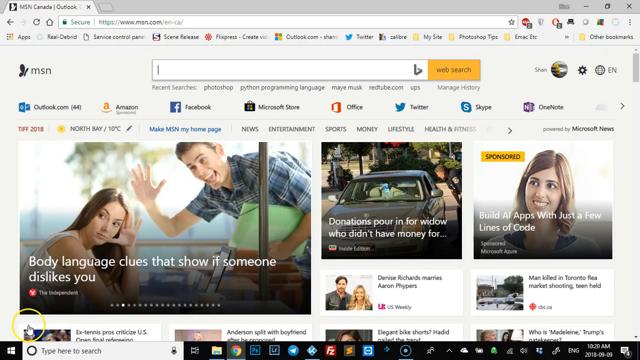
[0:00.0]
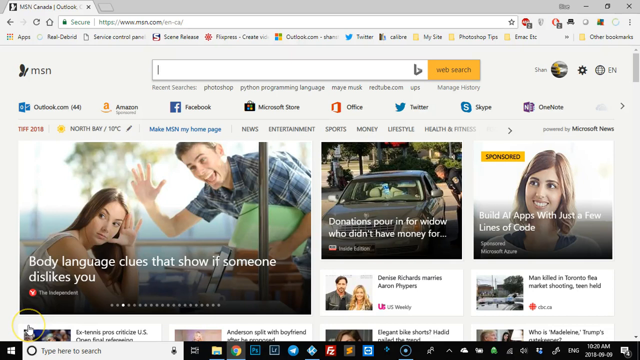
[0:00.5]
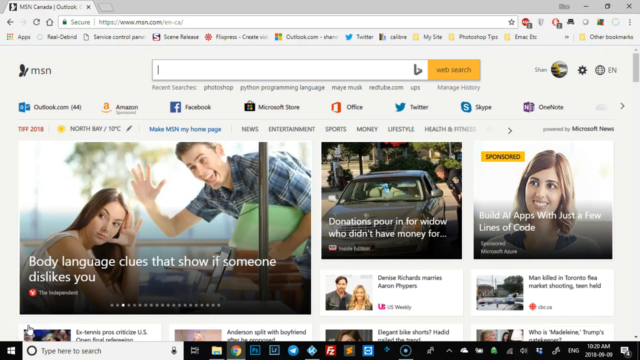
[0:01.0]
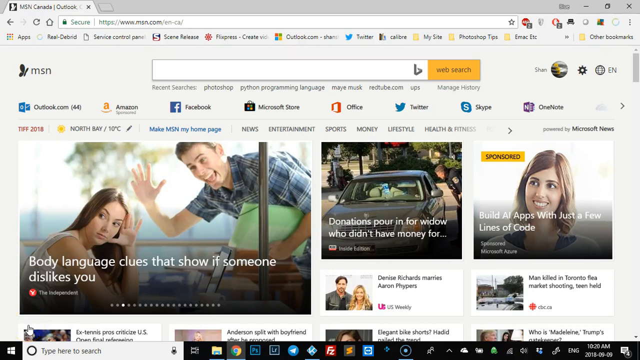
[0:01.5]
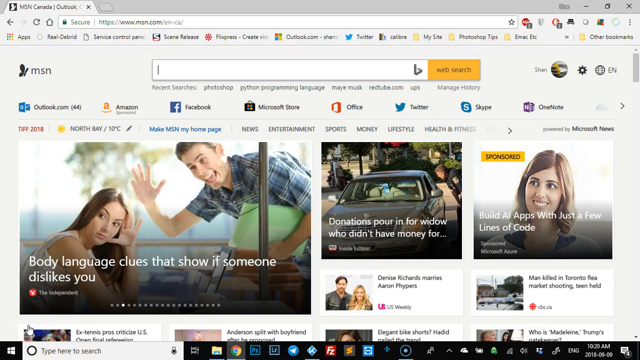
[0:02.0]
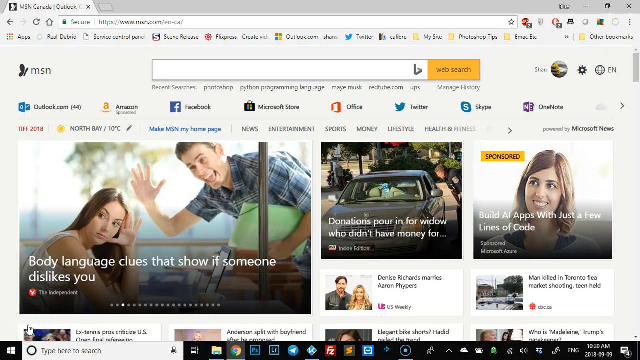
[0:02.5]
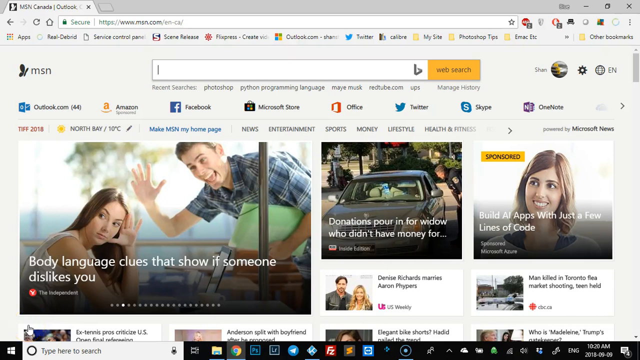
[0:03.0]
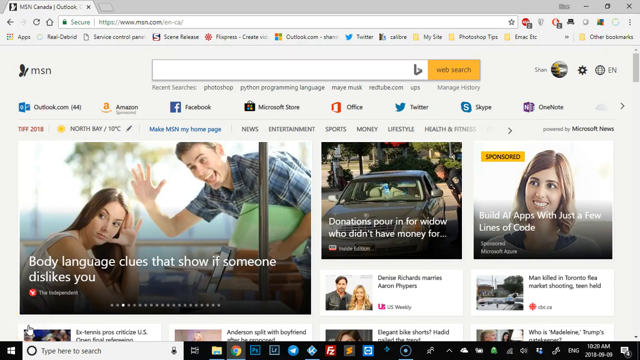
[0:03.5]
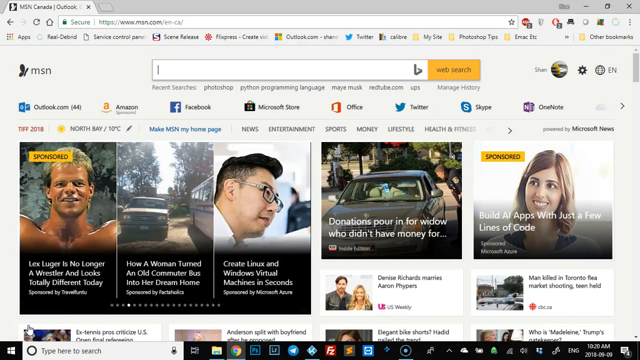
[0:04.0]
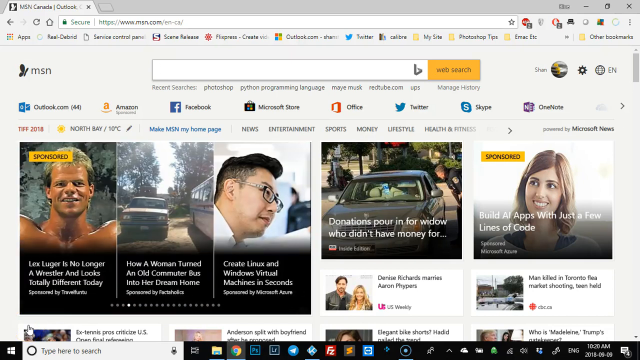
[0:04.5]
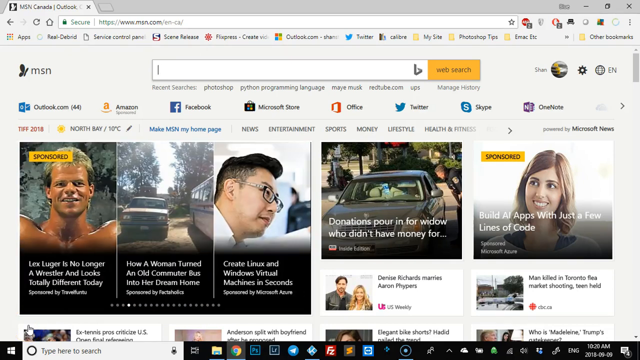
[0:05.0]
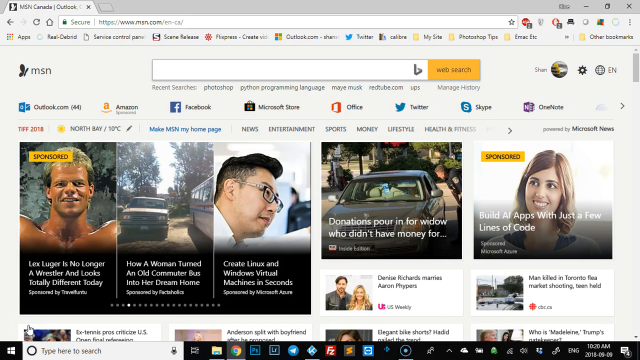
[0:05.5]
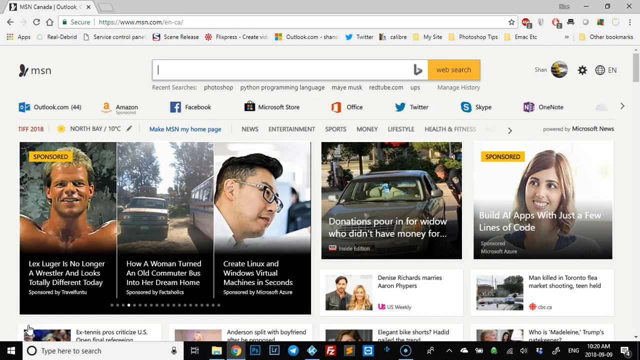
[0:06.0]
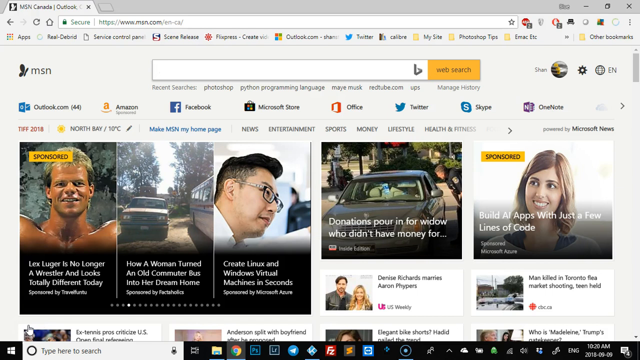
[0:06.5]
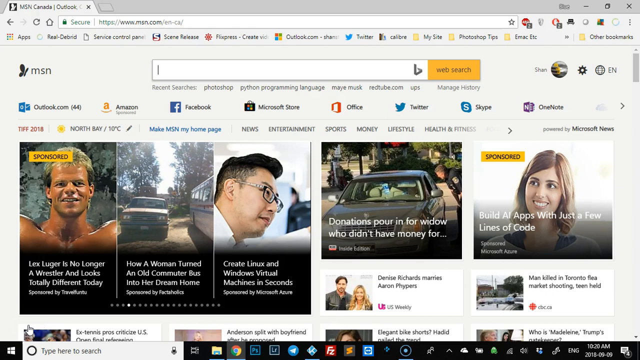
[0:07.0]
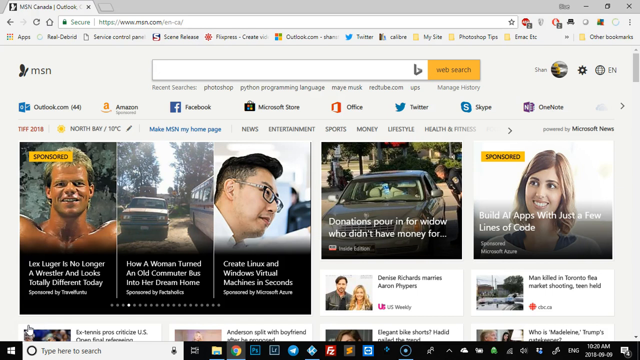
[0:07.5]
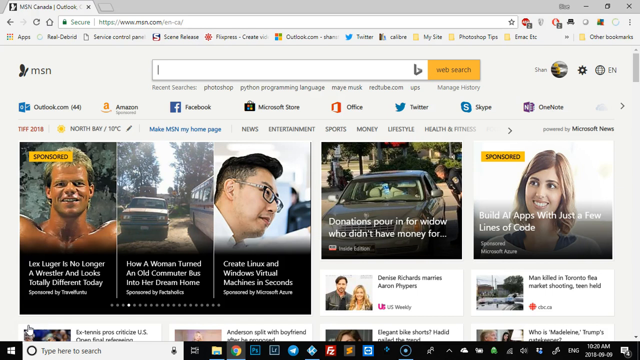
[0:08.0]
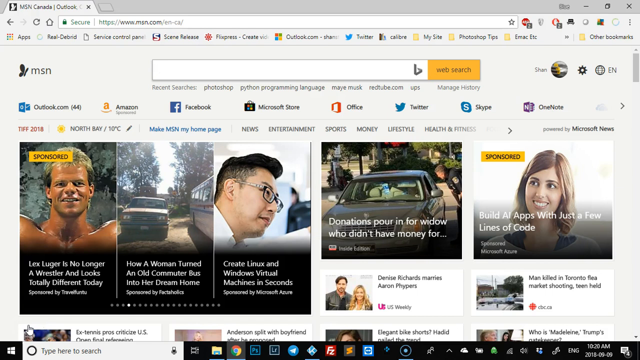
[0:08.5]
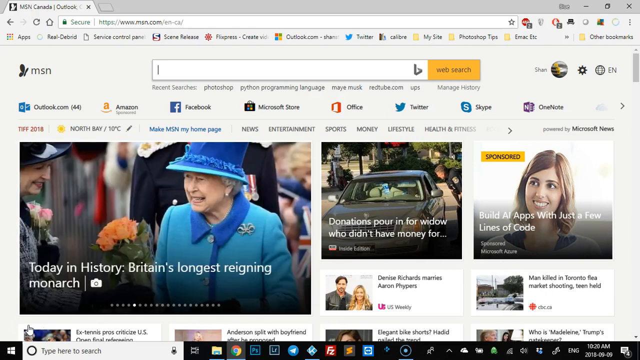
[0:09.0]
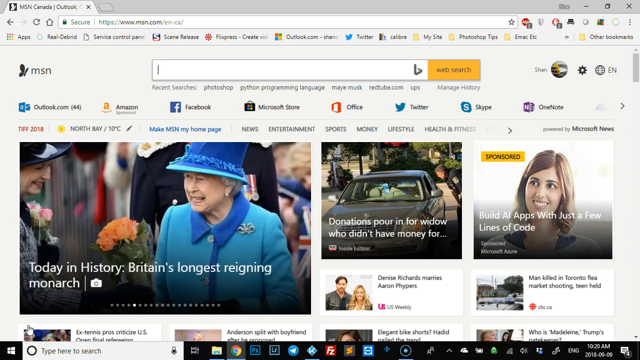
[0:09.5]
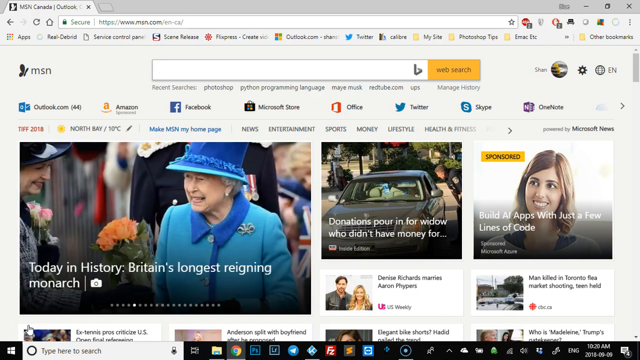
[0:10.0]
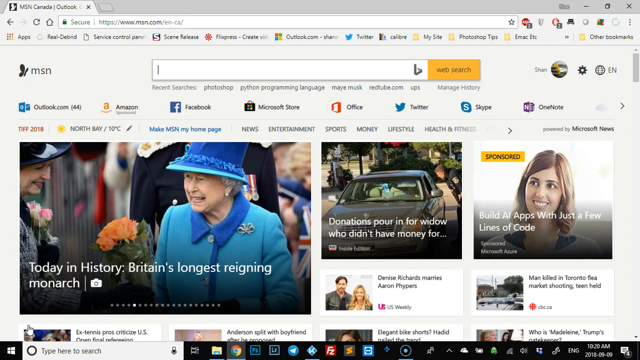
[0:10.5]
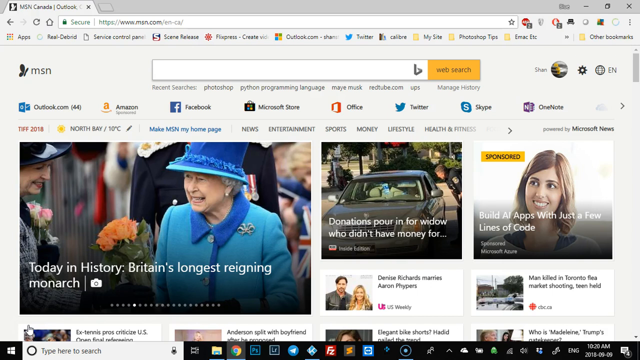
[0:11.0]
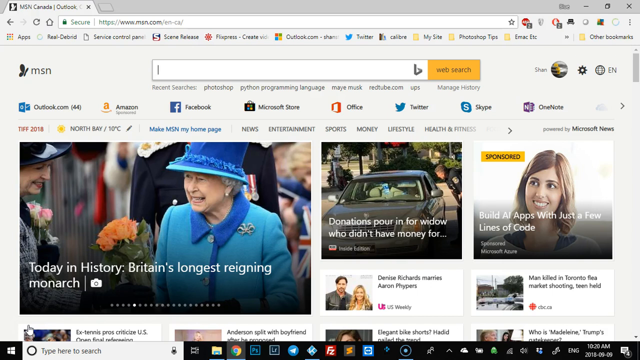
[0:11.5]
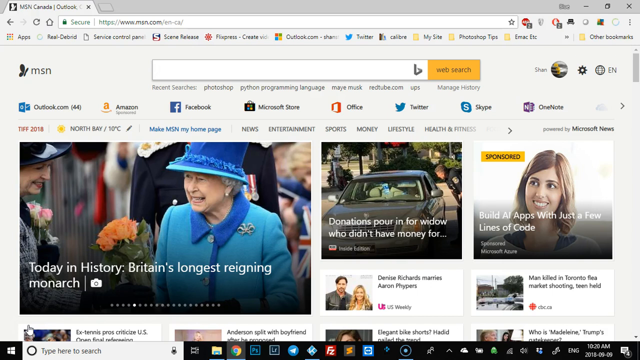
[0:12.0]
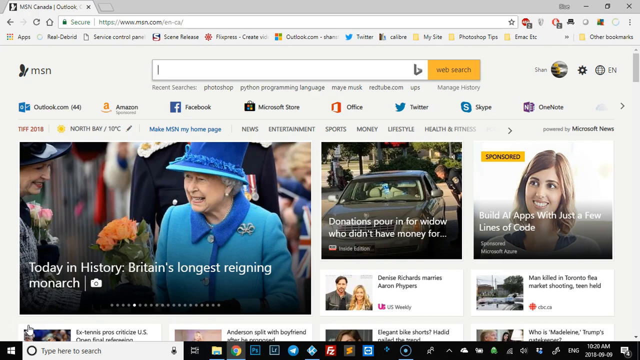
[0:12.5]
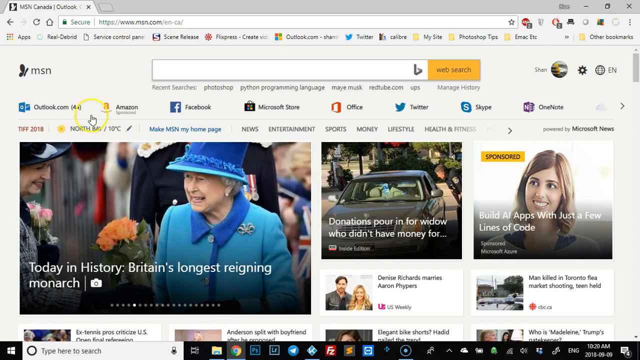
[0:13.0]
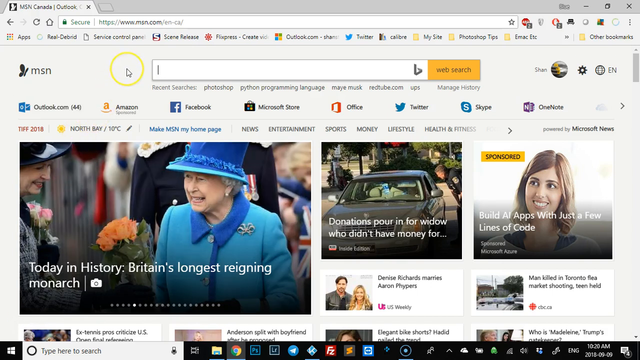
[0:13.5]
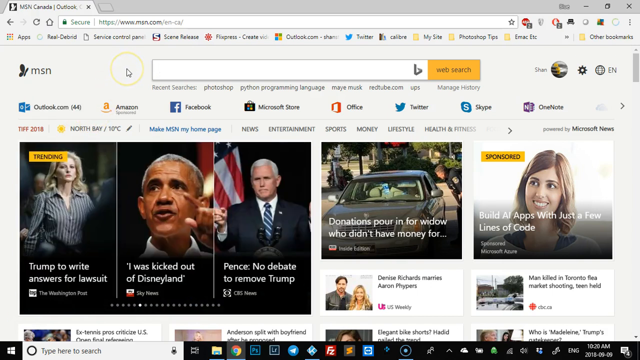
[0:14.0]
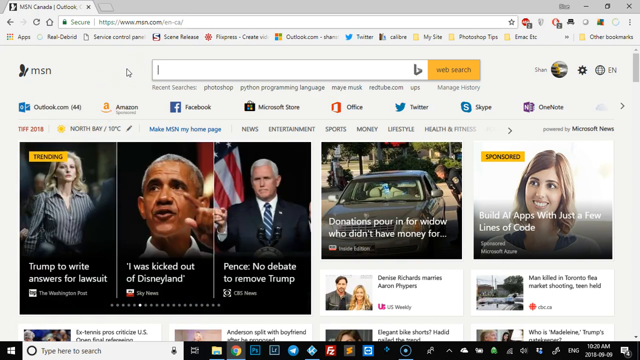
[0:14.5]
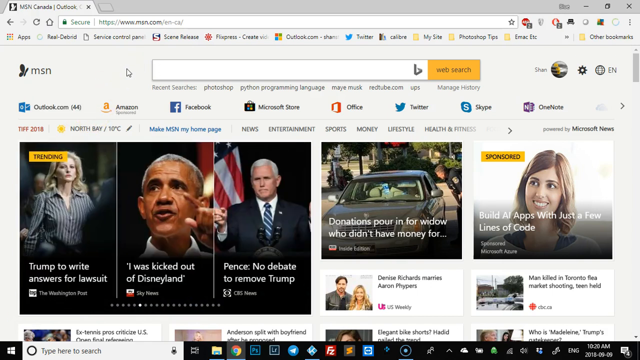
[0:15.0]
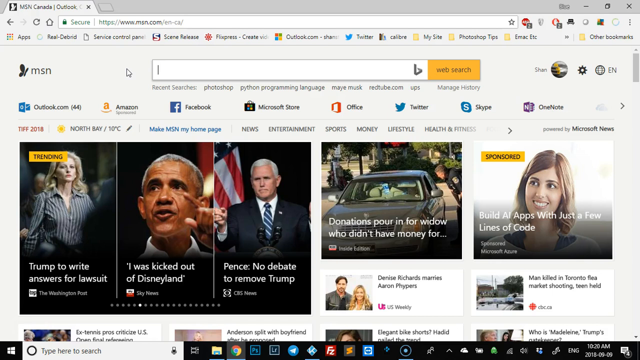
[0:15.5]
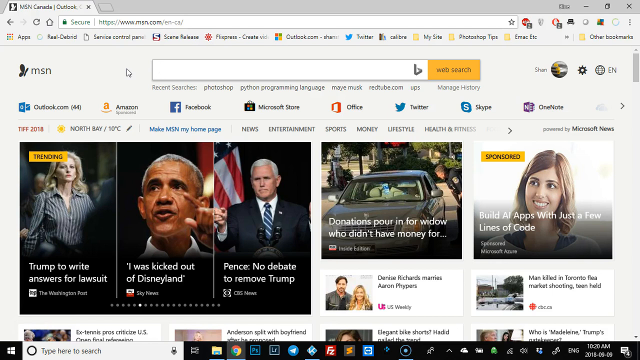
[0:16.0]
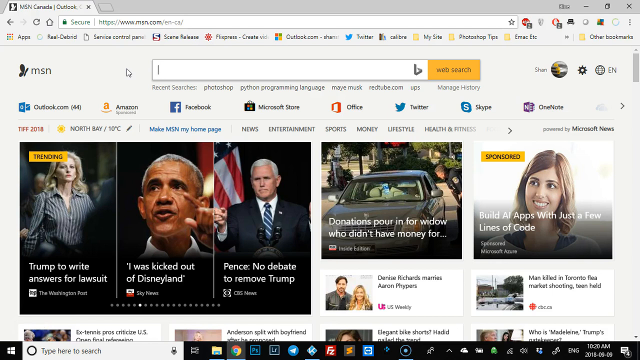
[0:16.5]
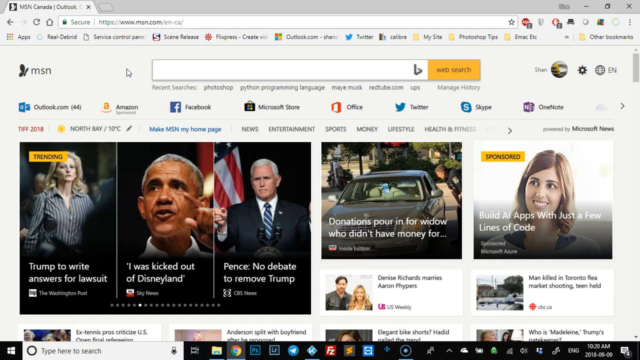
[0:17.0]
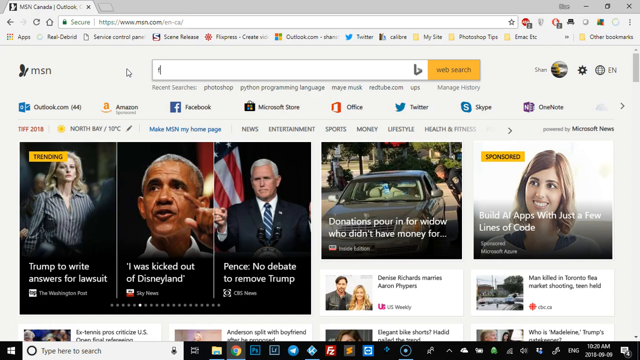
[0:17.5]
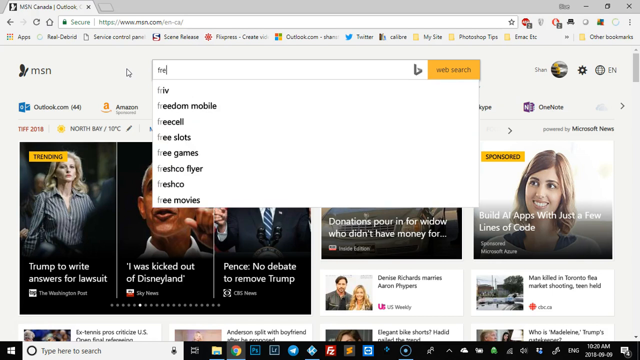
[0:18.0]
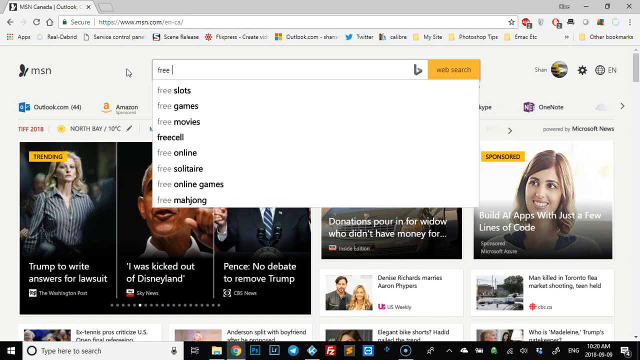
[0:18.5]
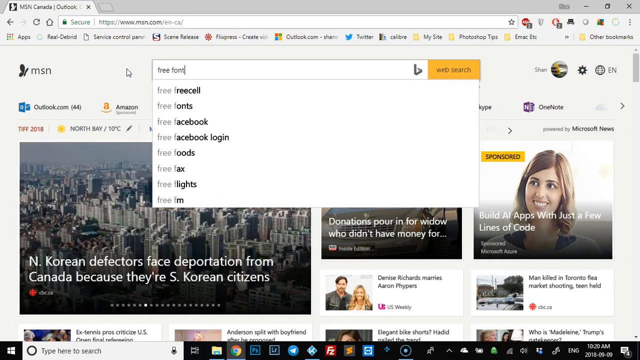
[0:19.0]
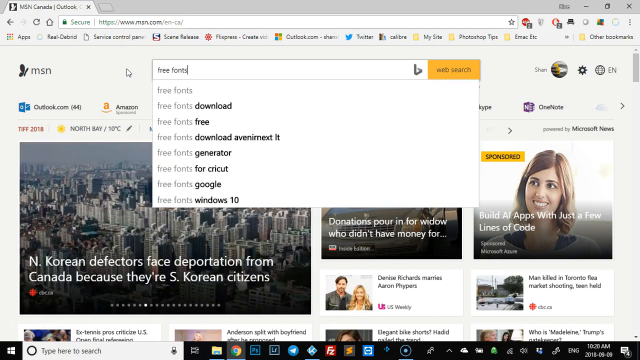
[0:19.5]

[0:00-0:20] The video opens on a webpage that seems to be an MSN homepage tailored to someone's preferences. It shows what seem to be pictures with information. One picture shows a male and a female: the male is reaching over with his hand out and looks elated, while she is not, sitting down and looking the other way; this item is about body language clues that show if someone dislikes you. The icon in the search window is shown, and it looks like it is for Bing. Underneath, the view switches to another set of pictures: a collage of three pictures in one, with one showing a carousel, one Lex Luger, and another about how a woman turned an old commuter bus into her dream home. One picture of an individual says "create Linux and Windows virtual machines in seconds," and there are other pictures or articles on the page.